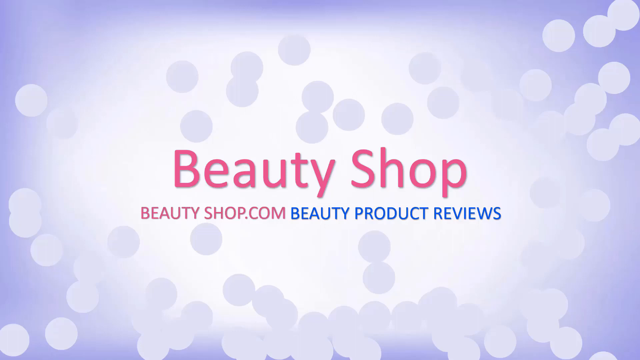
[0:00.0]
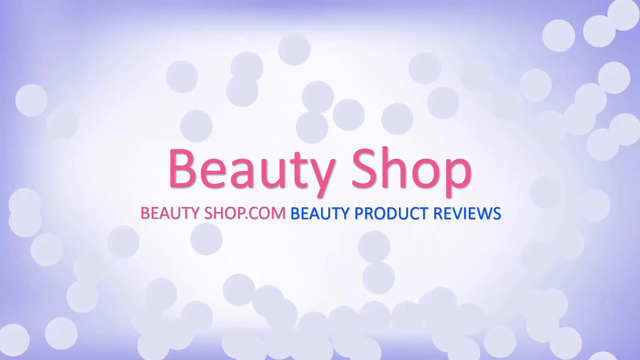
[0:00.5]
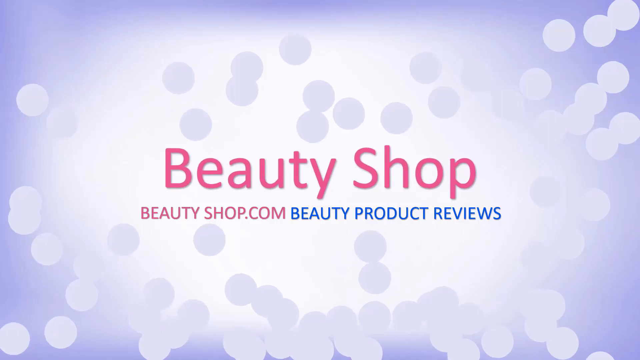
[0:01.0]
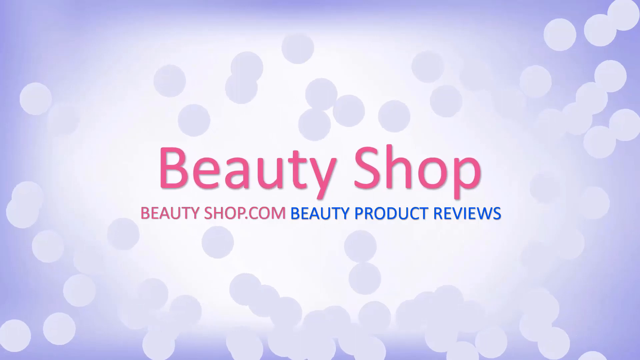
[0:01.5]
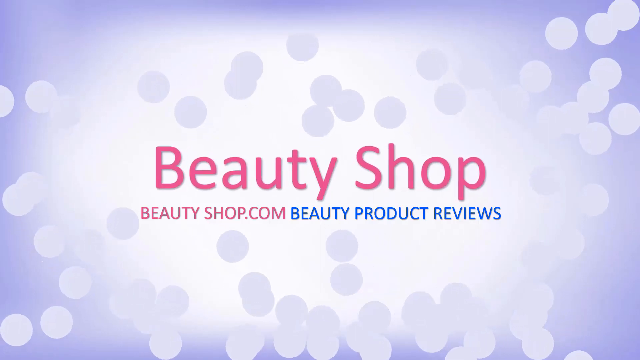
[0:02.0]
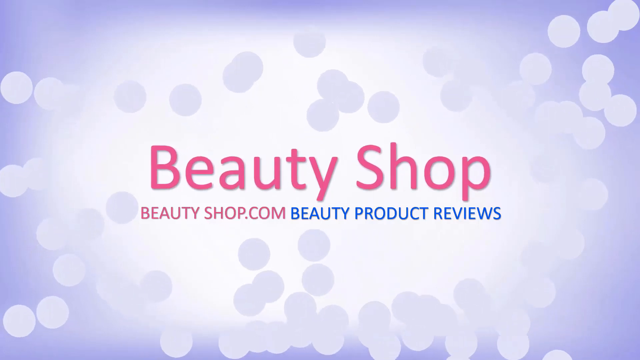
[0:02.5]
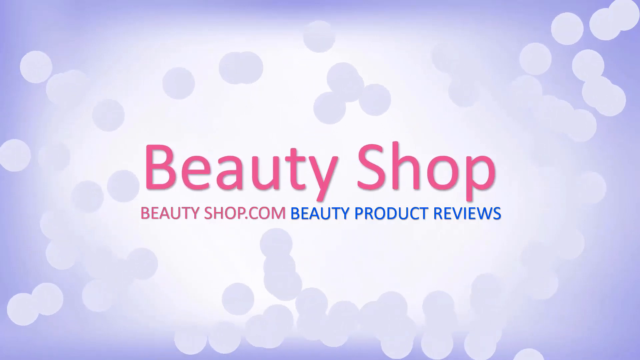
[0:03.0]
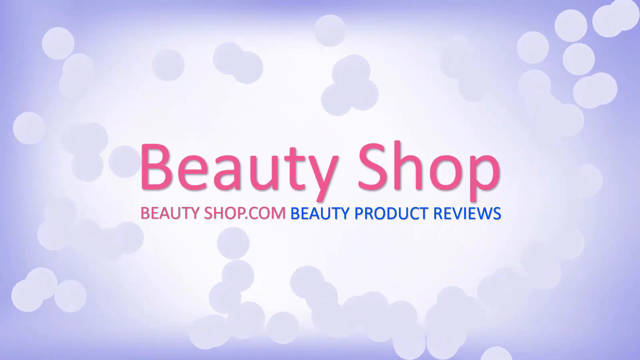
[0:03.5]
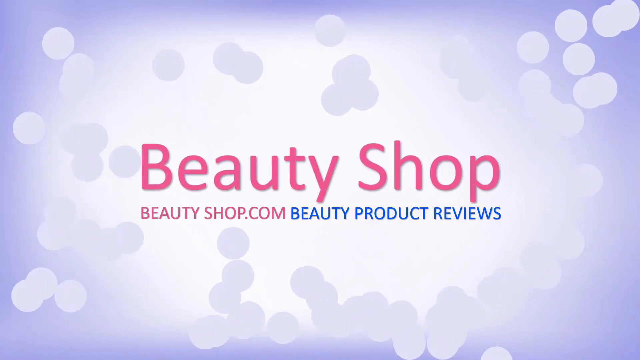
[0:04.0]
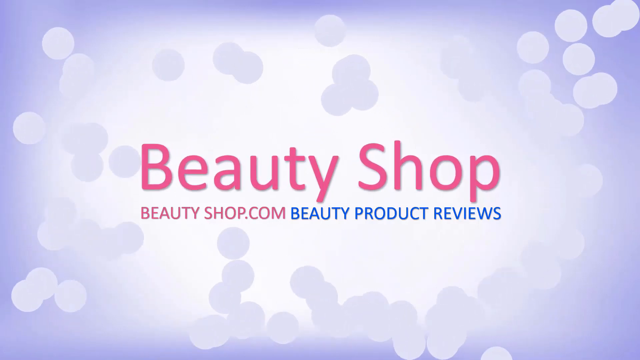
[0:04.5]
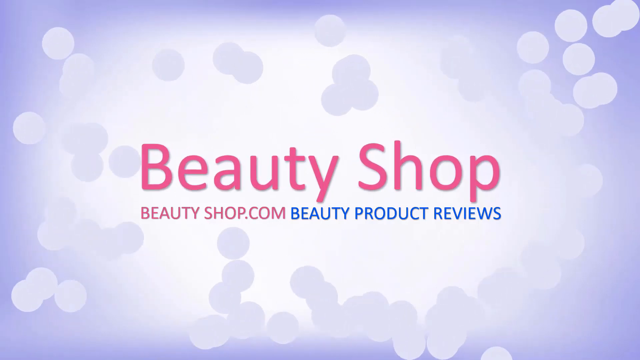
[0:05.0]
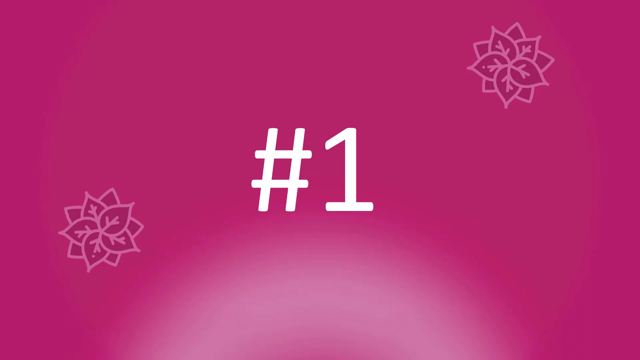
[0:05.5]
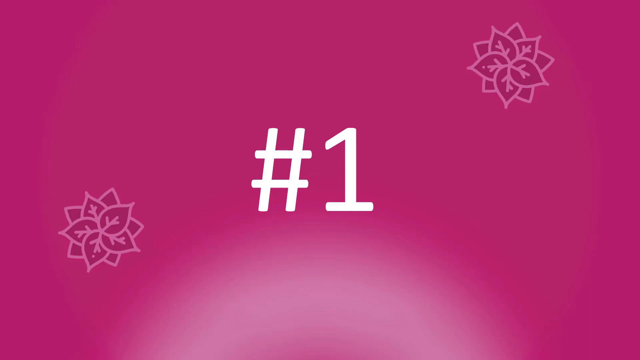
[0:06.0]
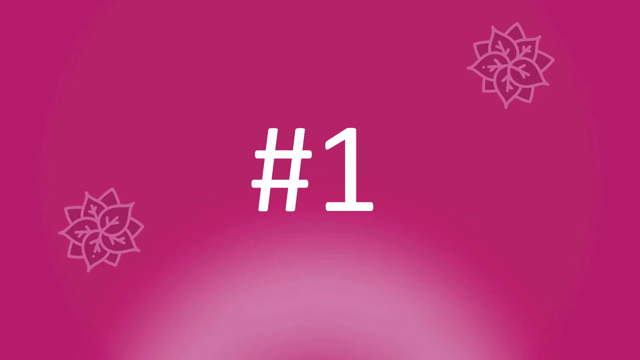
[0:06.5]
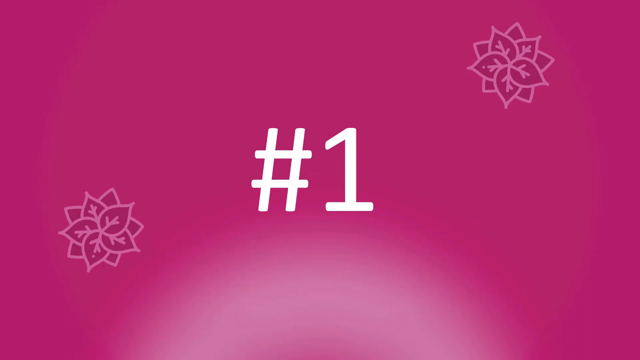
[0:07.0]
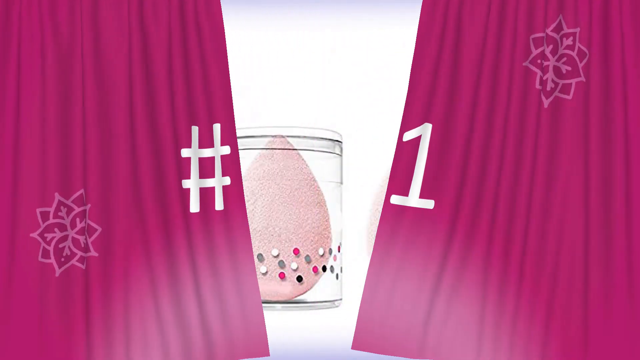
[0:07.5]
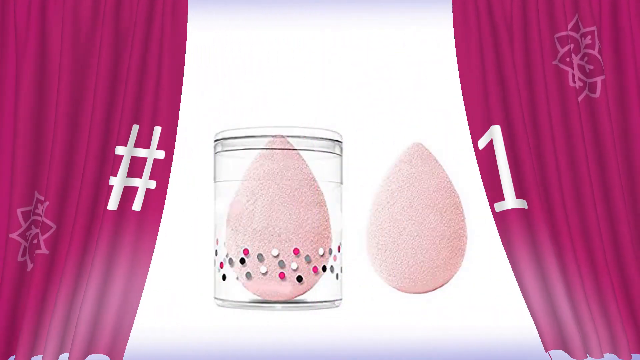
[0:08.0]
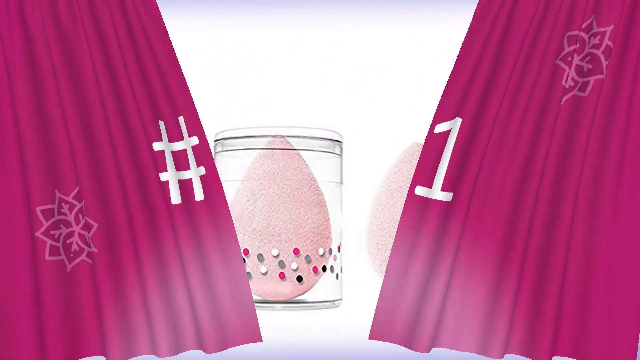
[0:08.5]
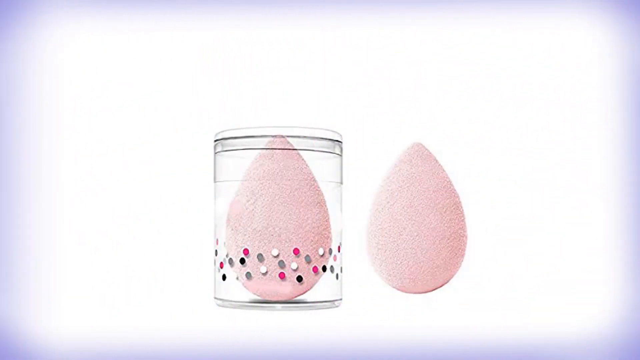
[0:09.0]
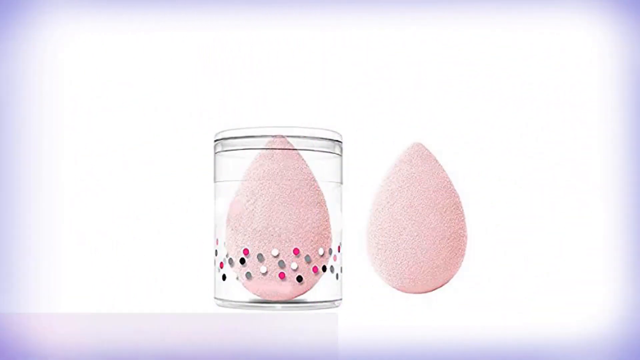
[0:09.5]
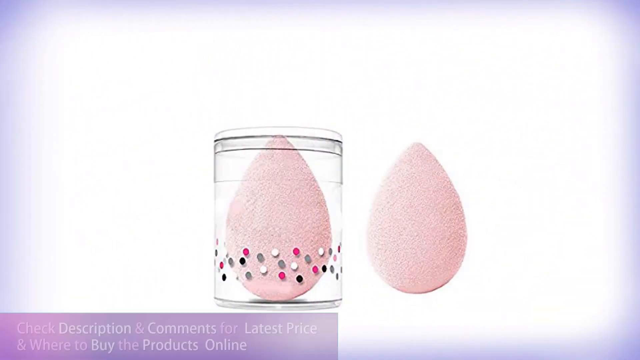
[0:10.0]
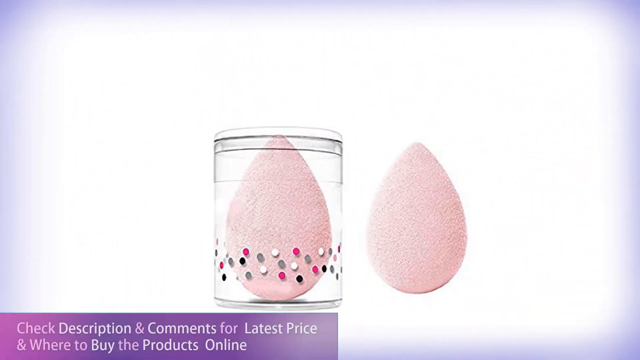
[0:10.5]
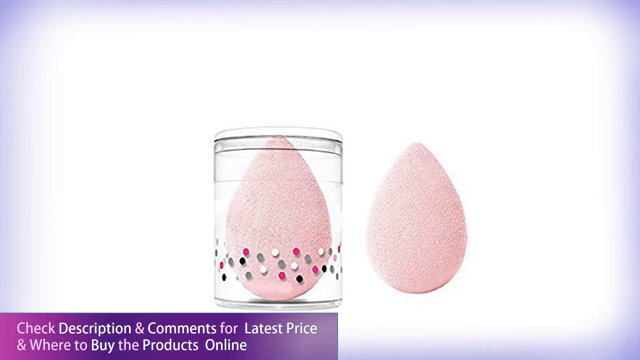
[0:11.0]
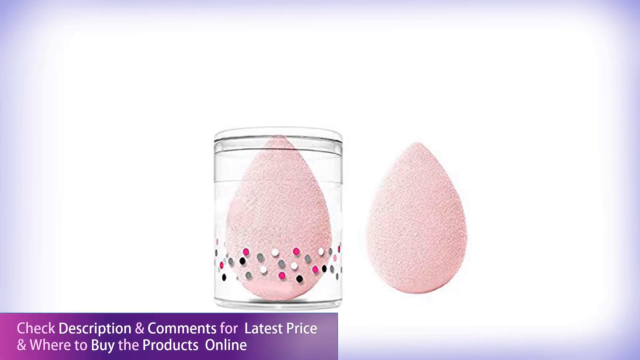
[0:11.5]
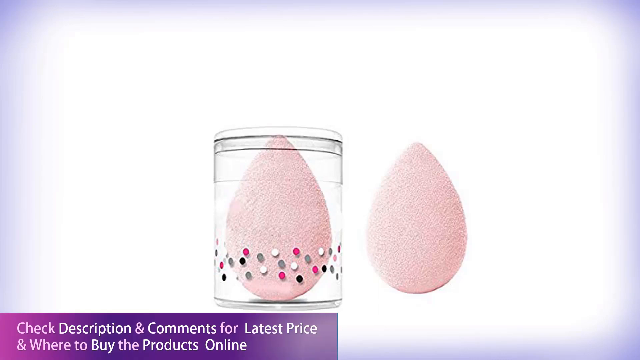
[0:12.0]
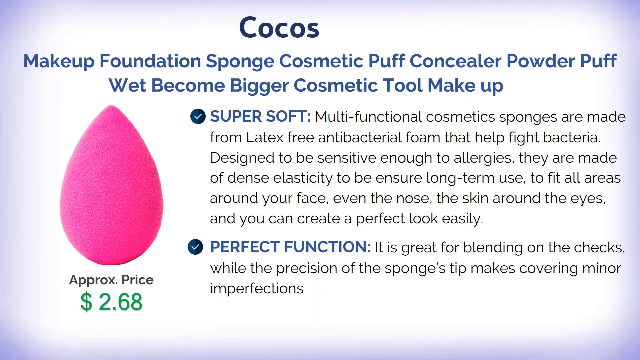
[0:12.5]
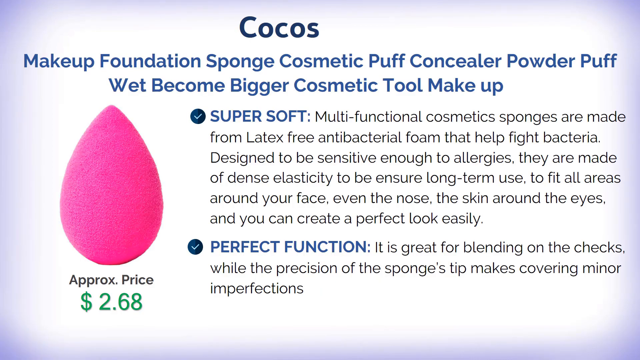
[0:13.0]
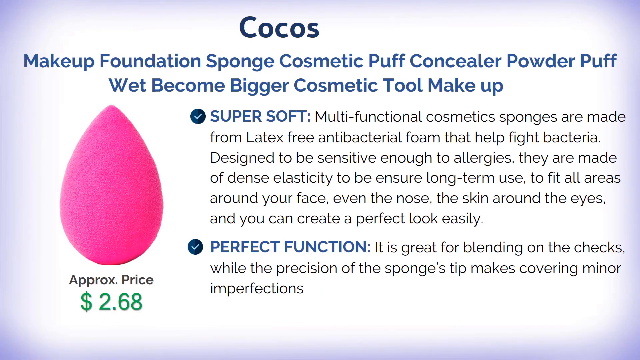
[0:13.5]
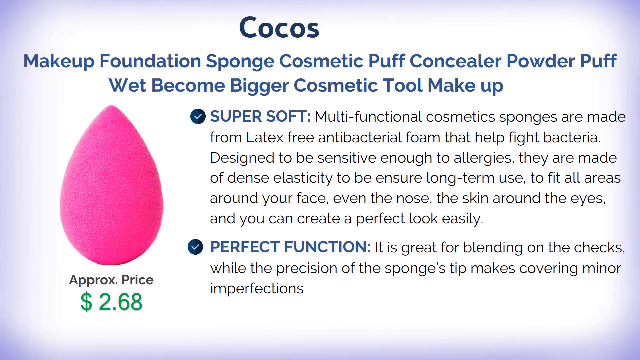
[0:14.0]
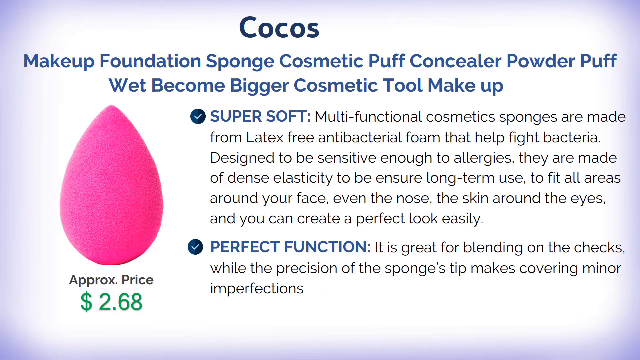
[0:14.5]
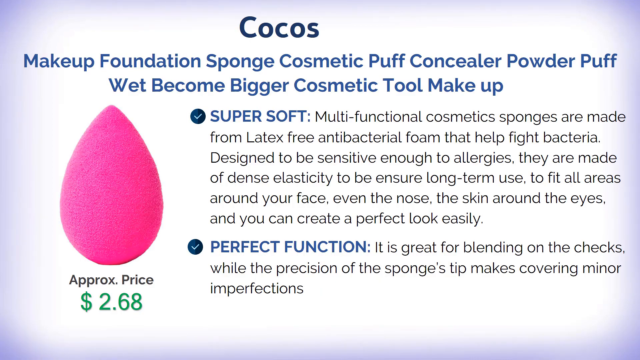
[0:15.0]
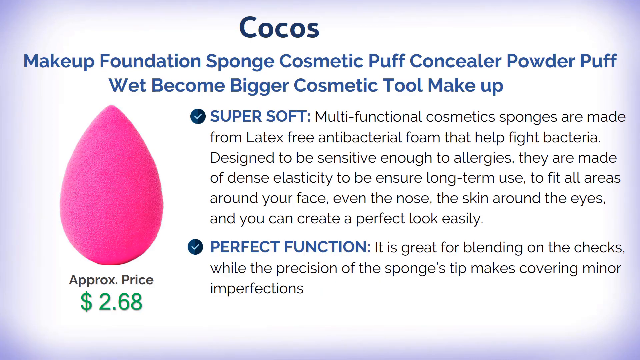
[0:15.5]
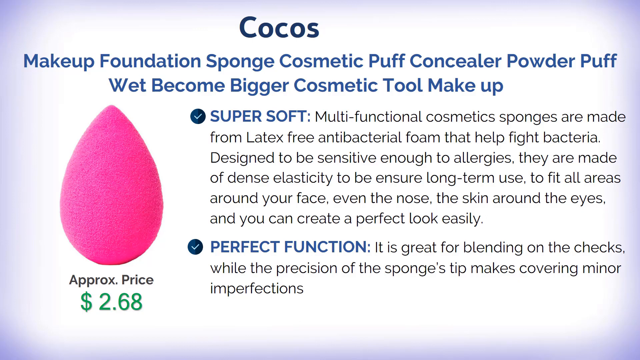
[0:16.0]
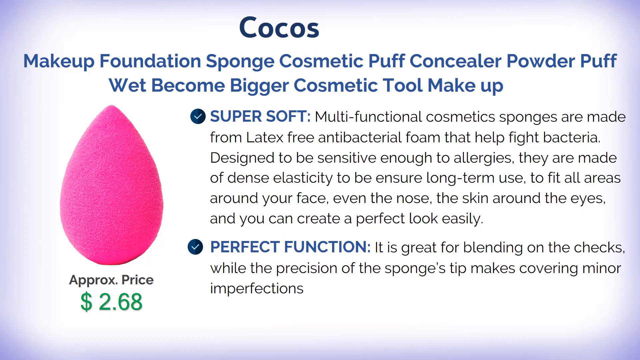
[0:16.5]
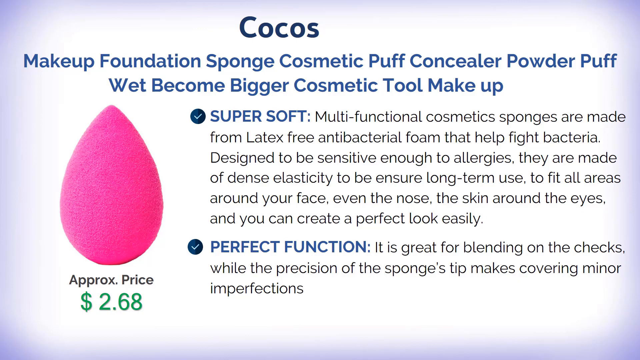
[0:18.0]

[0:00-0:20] The video opens on a white and purple background covered with little white polka dots or circles. In the foreground, red or pink text reads "Beautyshop, beautyshop.com", followed by blue text reading "Beauty Product Reviews". The dots or circles start moving around, and the scene changes to a violet or indigo background with a white number one in the center. The background turns into a curtain-like graphic and splits away. A white background follows, showing a clear container that looks like plastic with an unidentified pink teardrop-shaped thing inside it, and a duplicate of the item outside the container to the right. In the bottom left corner, a purple rectangle with white text reads "check description and comments for latest price and where to buy the products online".